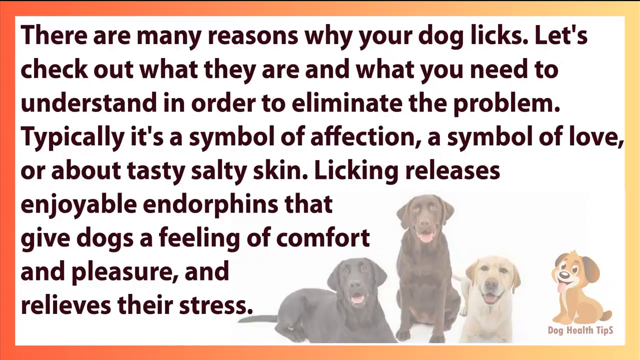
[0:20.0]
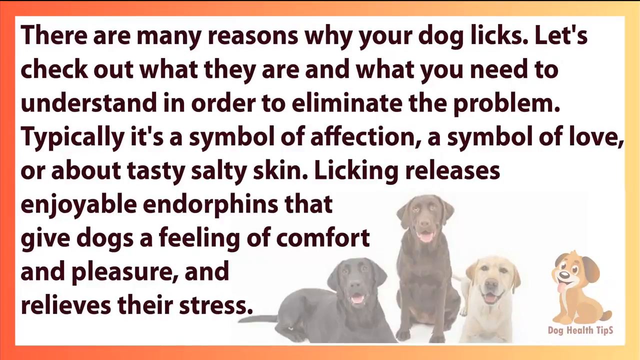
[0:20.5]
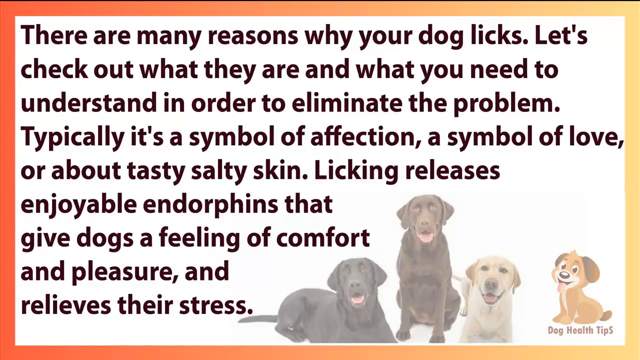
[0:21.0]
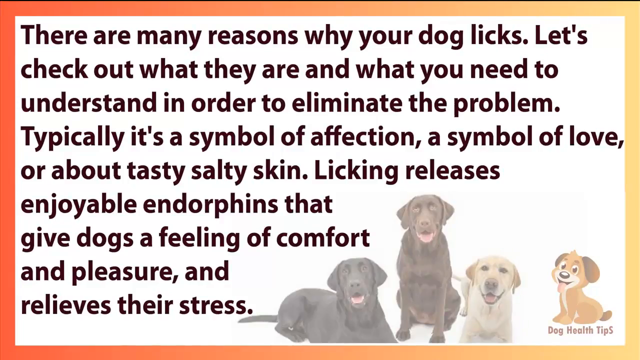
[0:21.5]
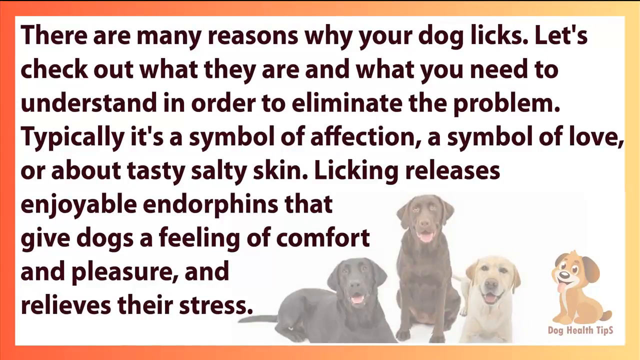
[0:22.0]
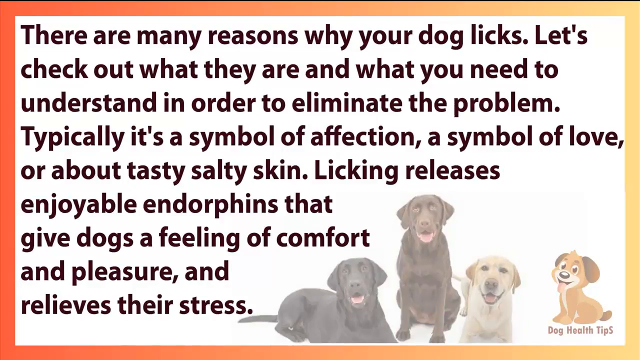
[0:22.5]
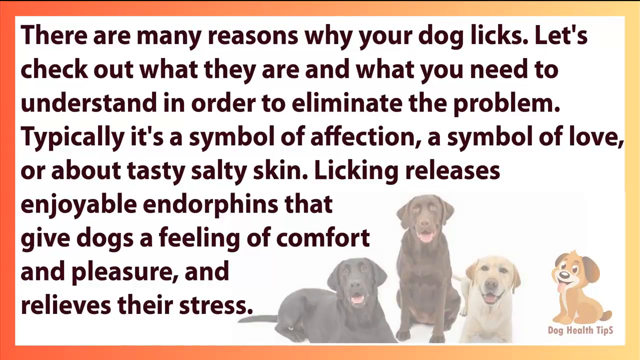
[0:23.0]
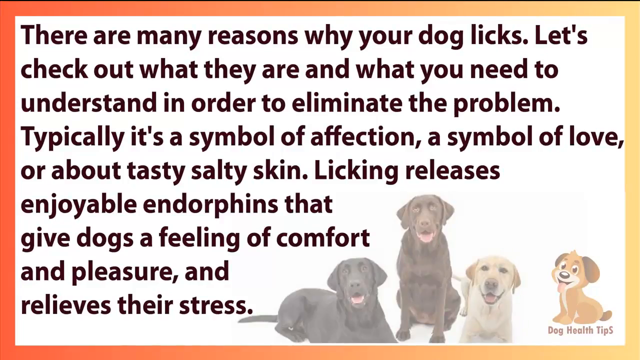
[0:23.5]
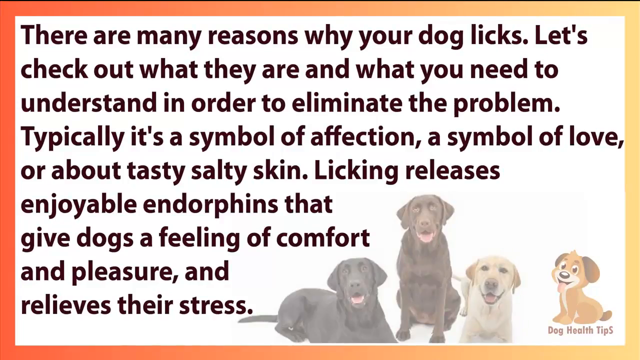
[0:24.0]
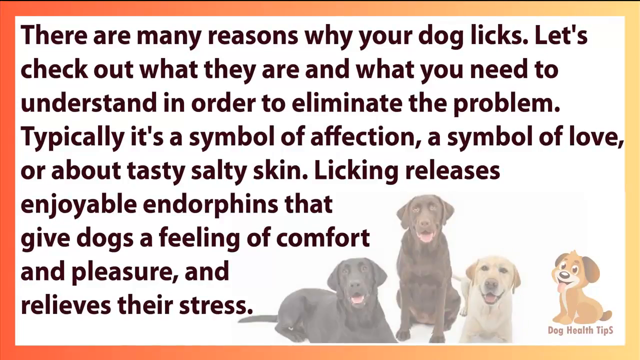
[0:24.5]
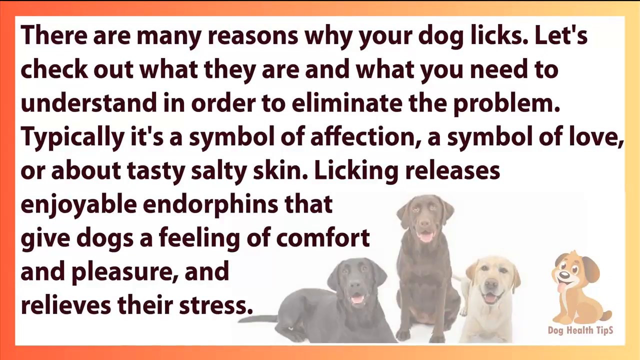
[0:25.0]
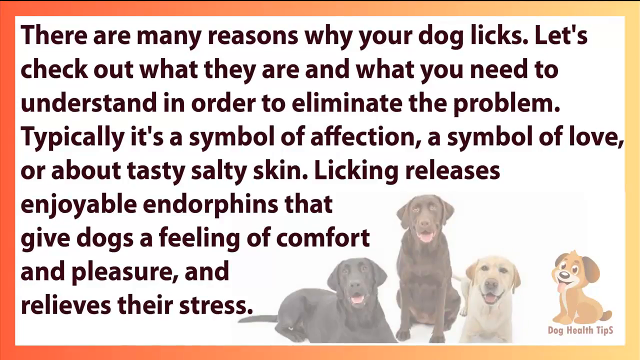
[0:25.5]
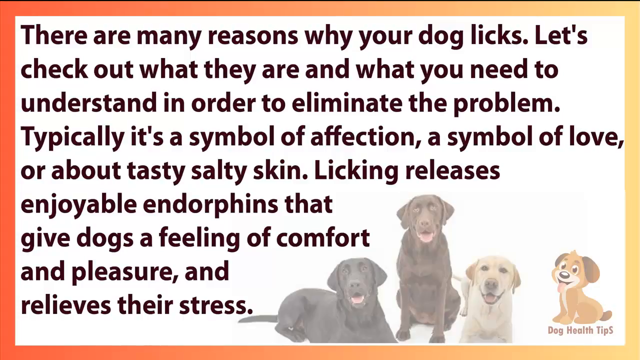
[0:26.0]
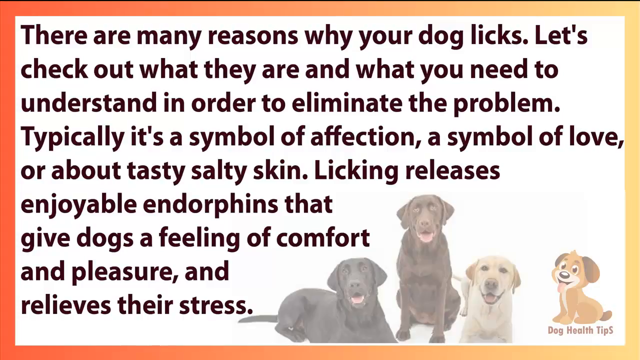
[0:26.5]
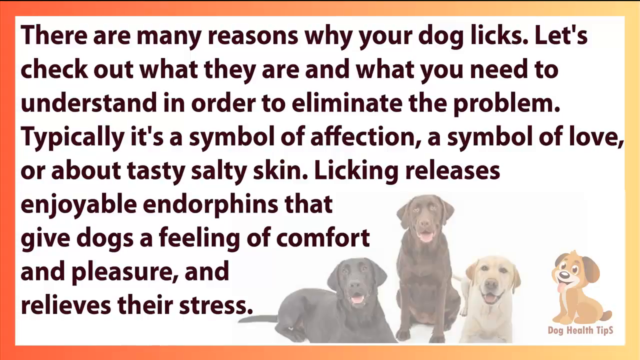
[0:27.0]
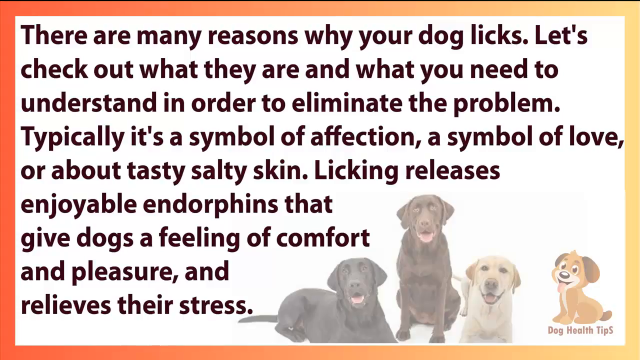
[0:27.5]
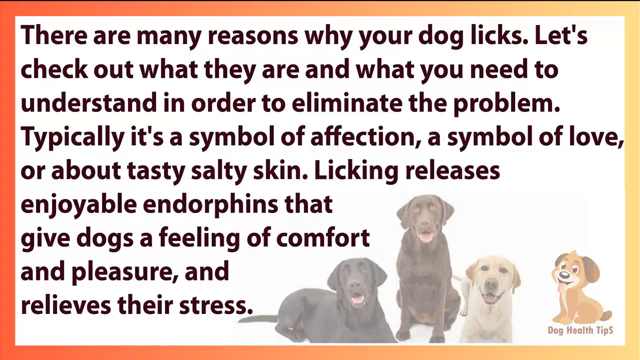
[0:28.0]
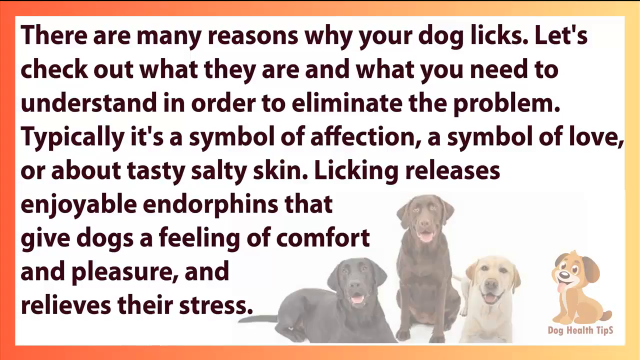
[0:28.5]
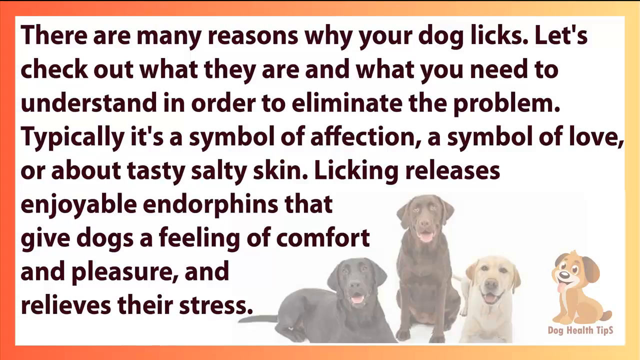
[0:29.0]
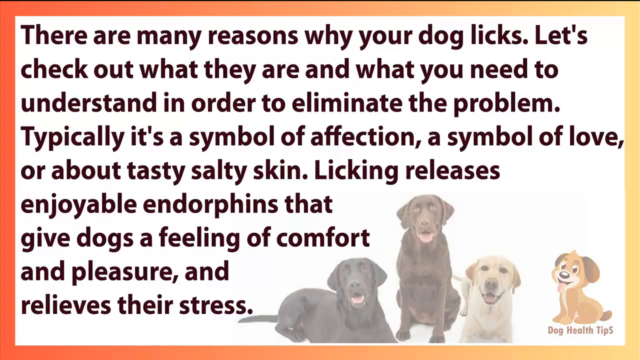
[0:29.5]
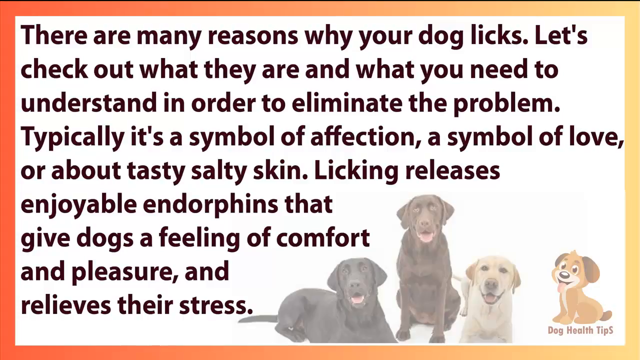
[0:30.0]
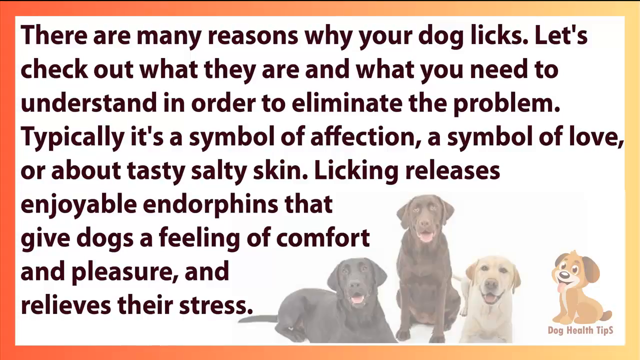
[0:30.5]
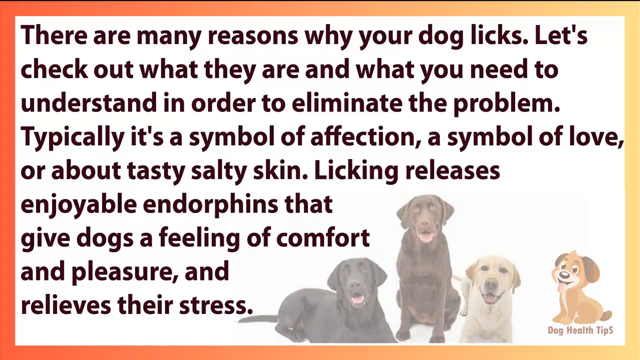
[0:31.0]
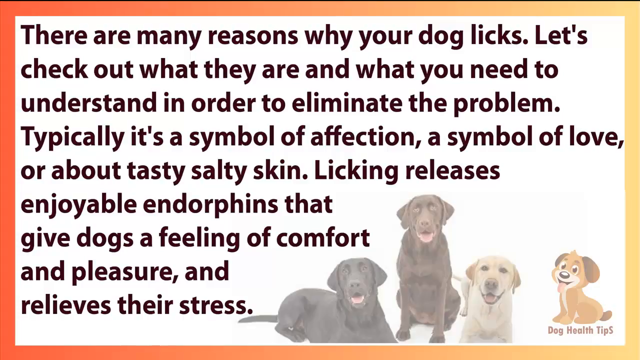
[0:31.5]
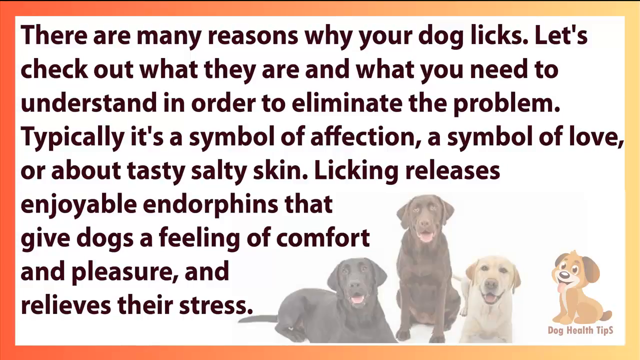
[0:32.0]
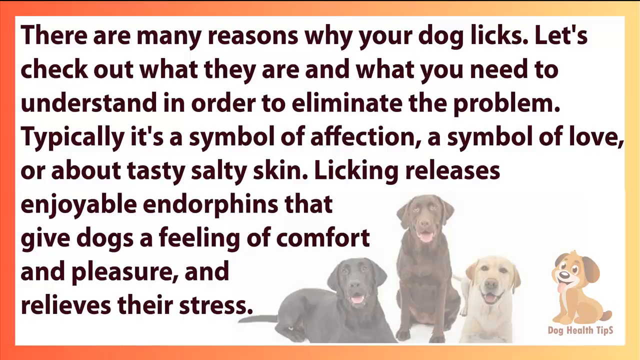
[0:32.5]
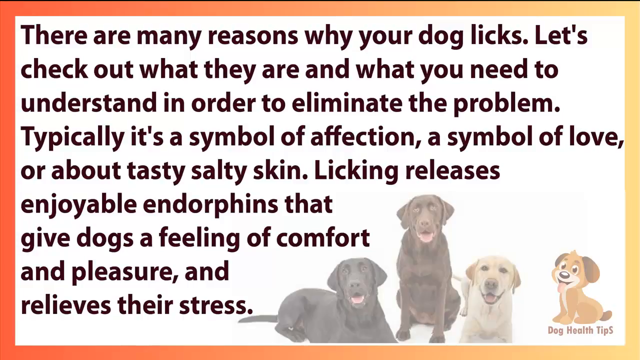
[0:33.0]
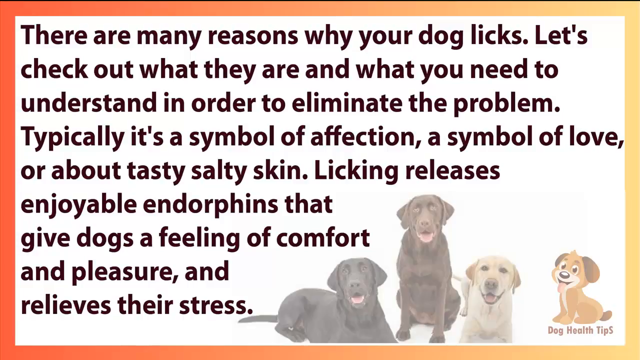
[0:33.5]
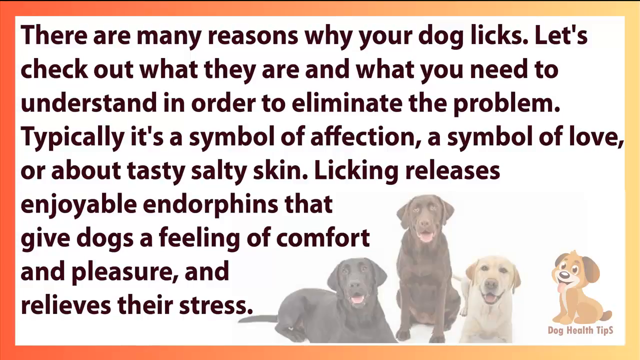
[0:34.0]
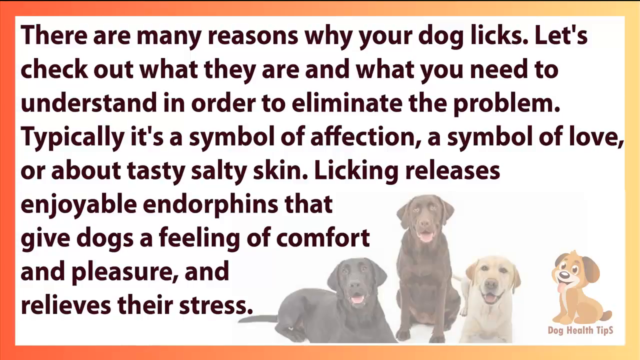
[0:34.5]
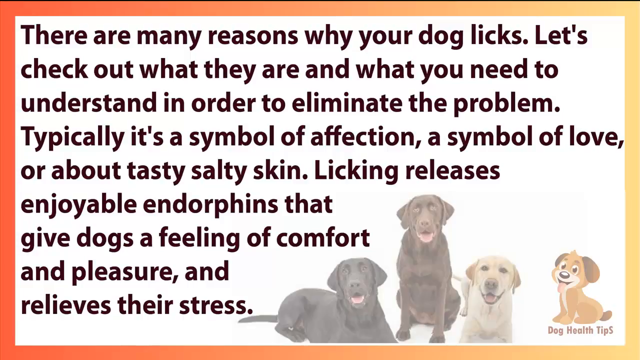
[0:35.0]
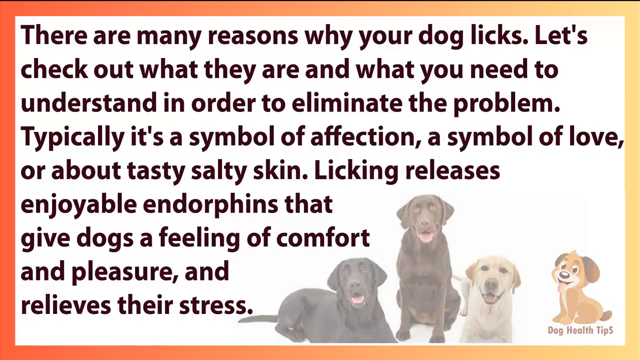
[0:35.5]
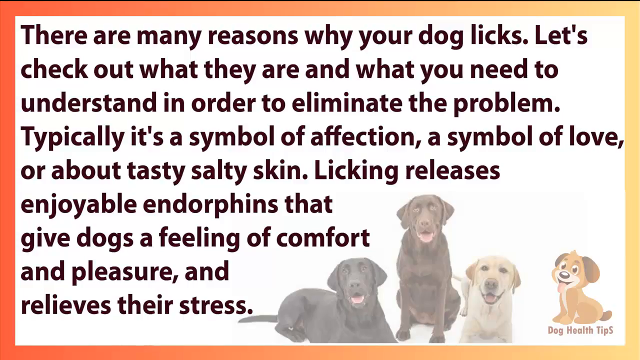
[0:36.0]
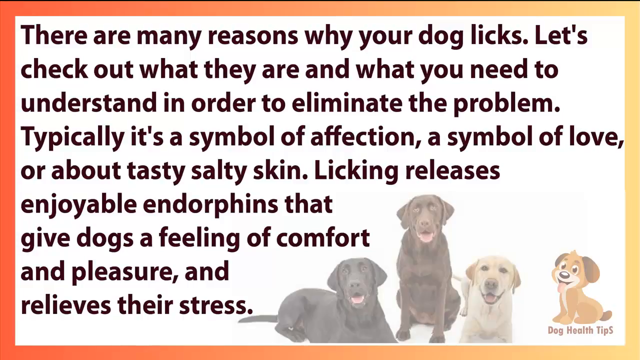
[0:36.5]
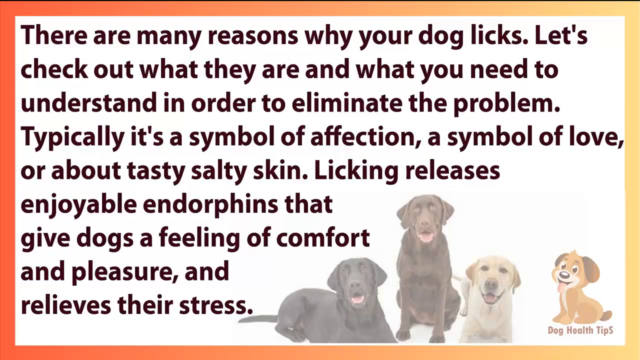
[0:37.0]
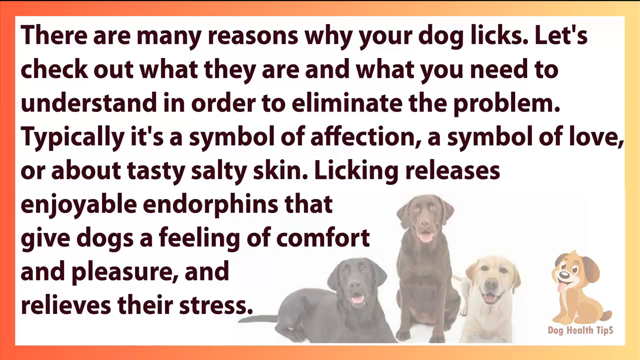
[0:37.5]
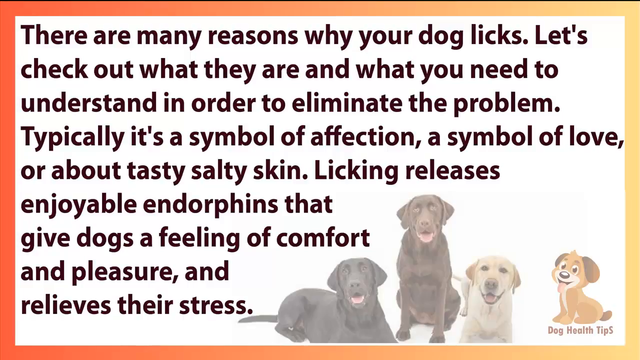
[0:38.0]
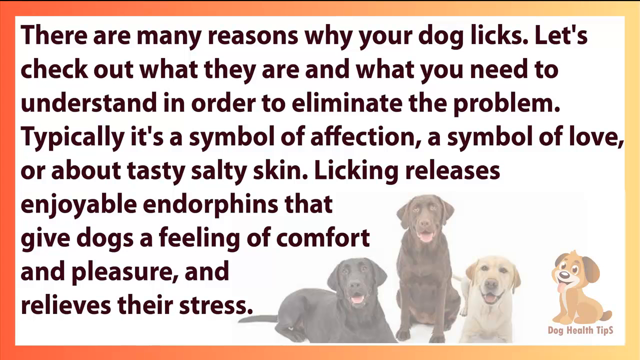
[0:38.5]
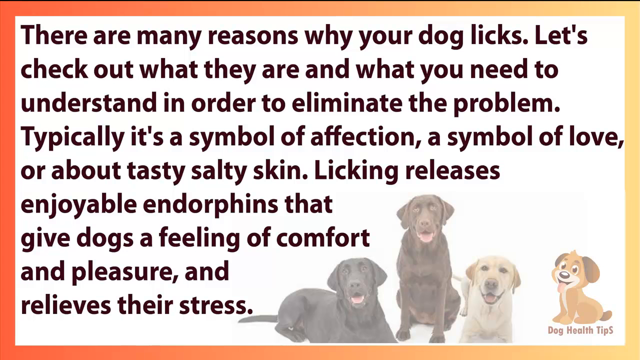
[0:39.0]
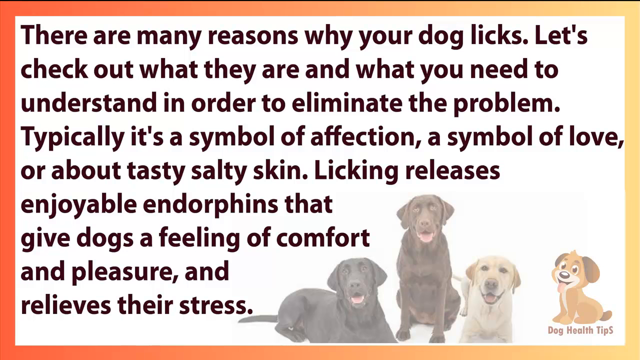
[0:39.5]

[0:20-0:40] Text on the screen states: "There are many reasons why your dog licks, let's check out what they are and what you need to understand in order to eliminate the problem. Typically it's a symbol of affection, a symbol of love or about tasty salty skin. Licking releases enjoyable endorphins that give dogs a feeling of comfort and pleasure and relieves their stress." The background is white, and at the bottom of the screen on the right-hand side three dogs are sitting, looking at the camera. The cartoon dog logo is in the bottom right-hand corner. A border around the text is slightly ombre, starting red, turning orange and then yellow. The three dogs look like Labradors: a yellow lab, a brown lab and a black lab. They all look to be smiling.